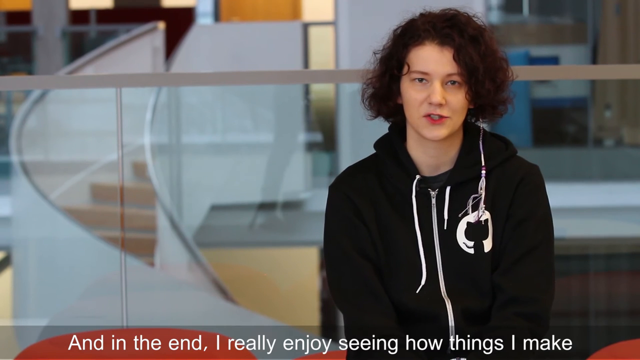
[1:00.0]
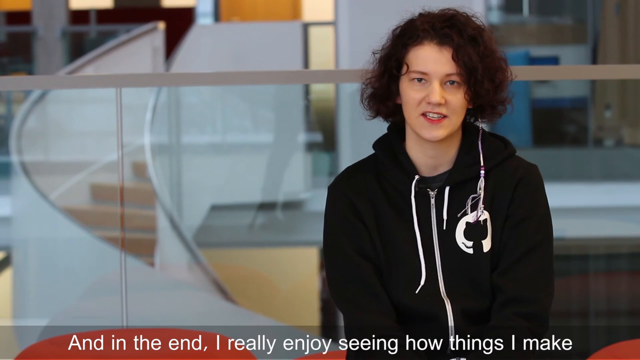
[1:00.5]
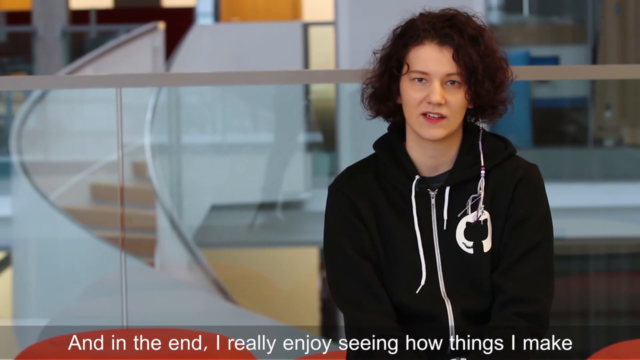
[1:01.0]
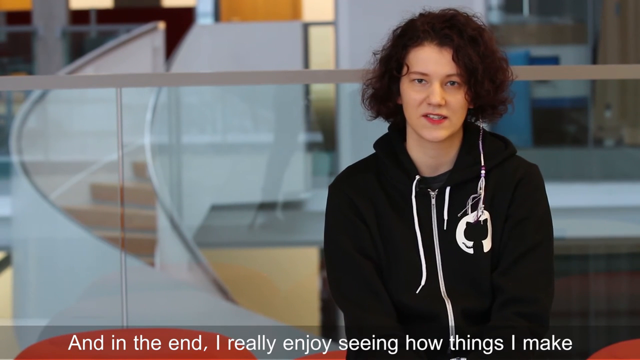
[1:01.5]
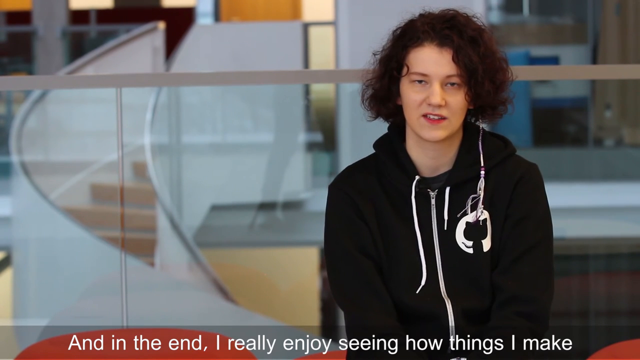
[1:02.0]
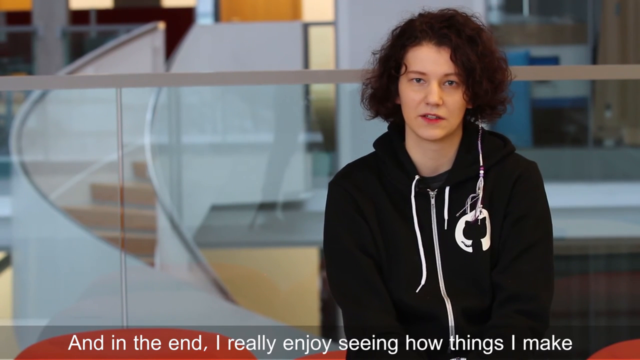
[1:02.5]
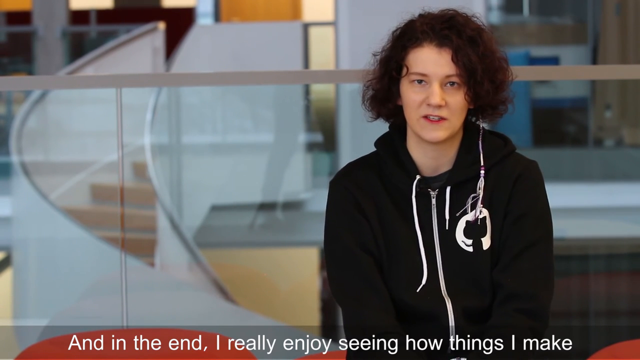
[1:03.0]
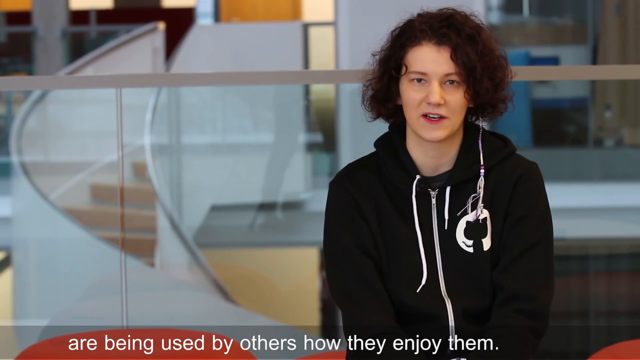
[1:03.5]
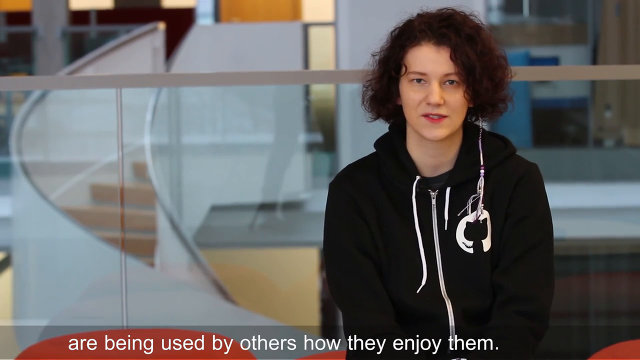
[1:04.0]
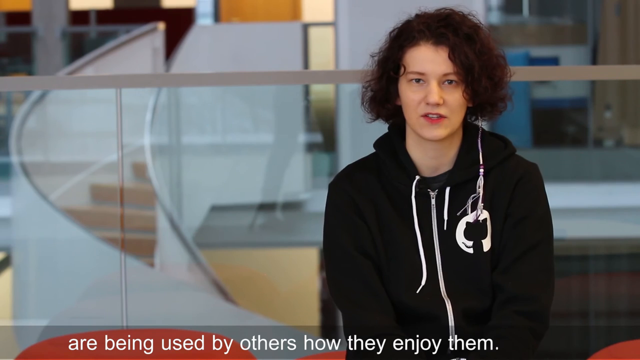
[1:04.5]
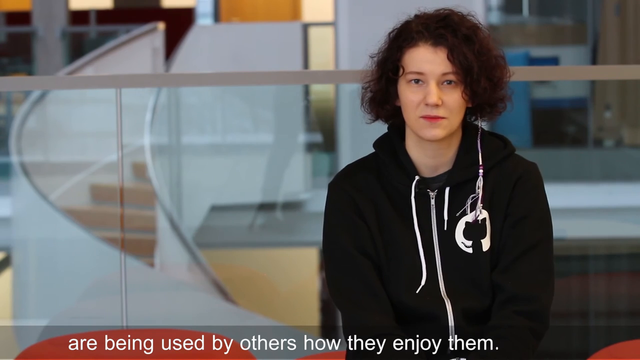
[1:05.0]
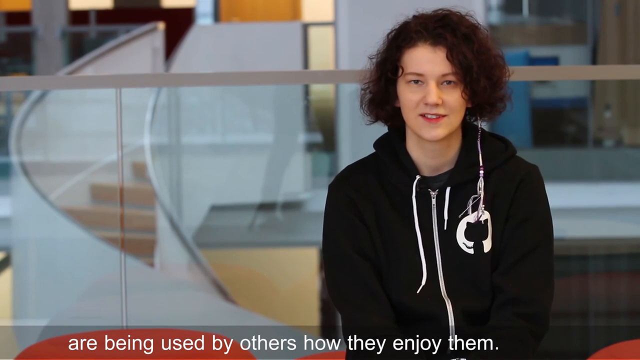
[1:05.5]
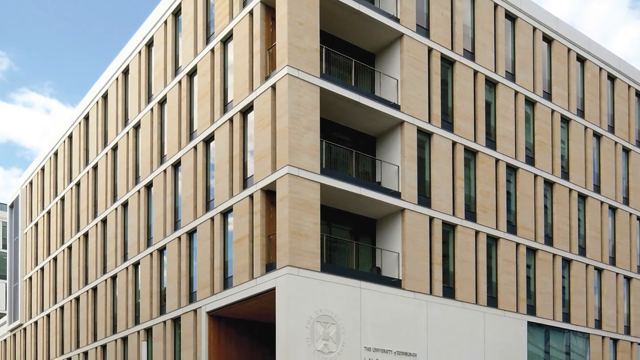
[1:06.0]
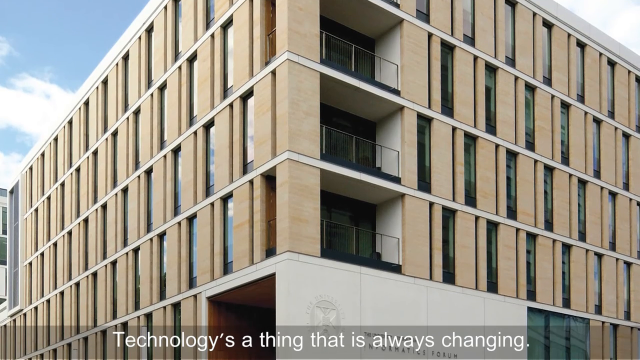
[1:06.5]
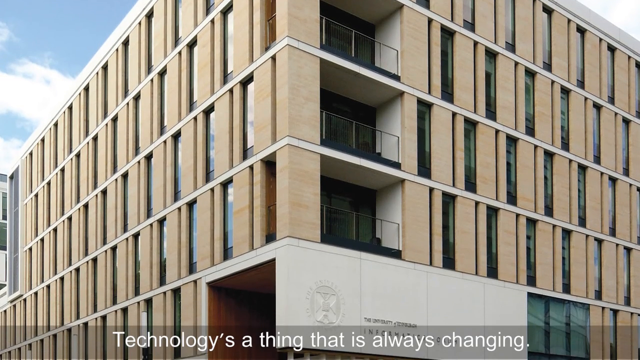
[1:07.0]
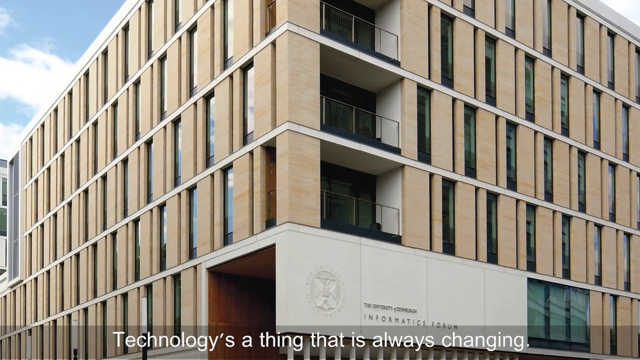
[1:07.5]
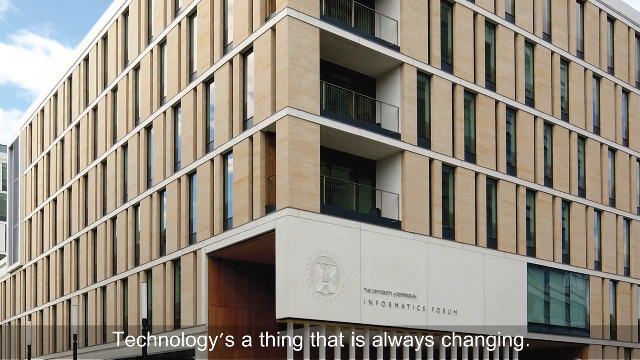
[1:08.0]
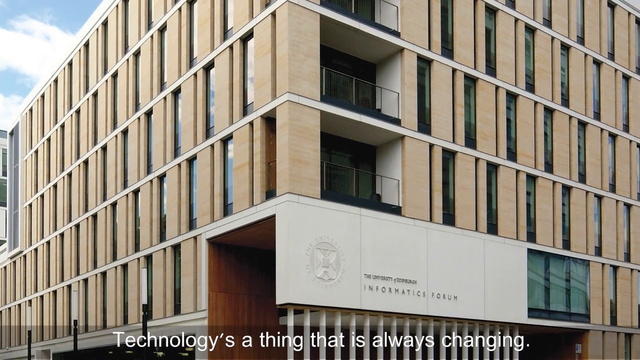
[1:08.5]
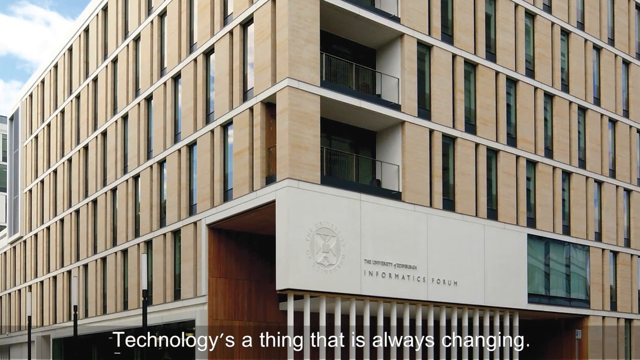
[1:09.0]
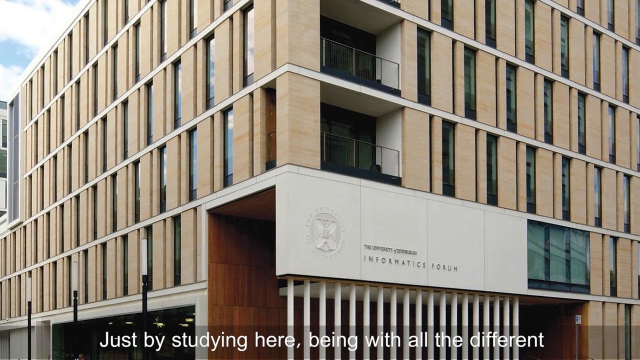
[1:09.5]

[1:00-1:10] A young girl with short, curly brown hair wears a jacket that looks like a hoodie, zipped all the way up, with a small white and black circular kitty cat logo on it. Behind her is a large glass window and a windy staircase made of a clear white material with silver handrails. Text at the bottom of the screen reads "And in the end I really enjoy seeing how things I make are being used by others, how they enjoy them." The video then transitions to a yellow building with a lot of windows and some balconies. Text at the bottom reads "Technology is a thing that is always changing." Text on the building reads "Informatics Forum." The view moves down the screen, showing some of the pillars attached to the building. Additional text reads "Just by studying here, being with all the different" and then seems to cut off.